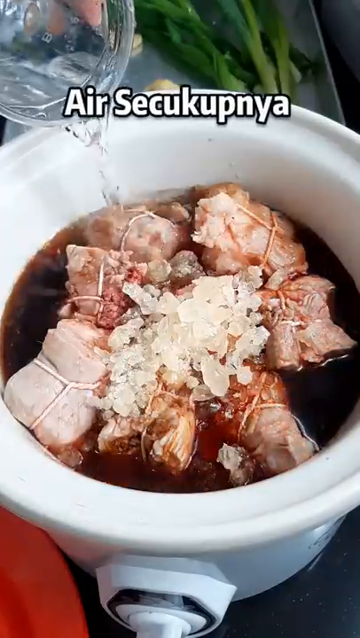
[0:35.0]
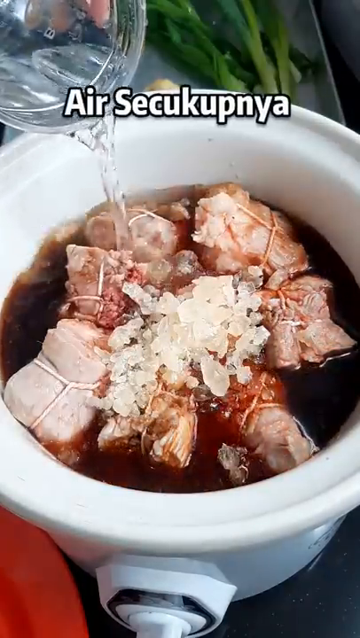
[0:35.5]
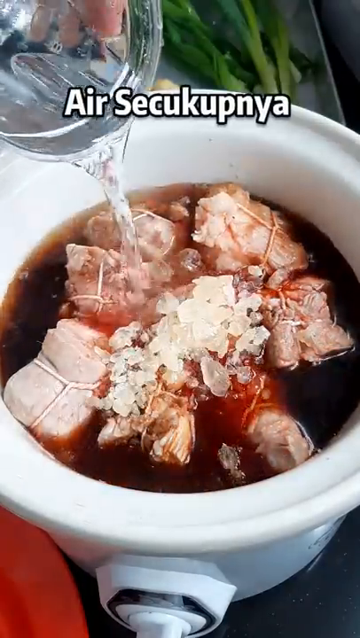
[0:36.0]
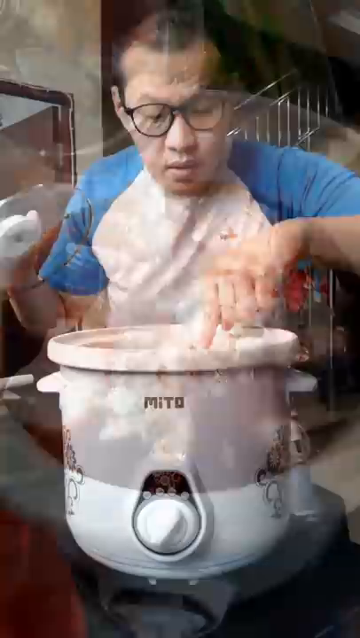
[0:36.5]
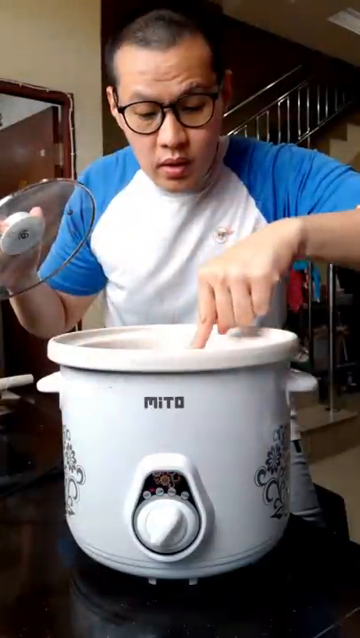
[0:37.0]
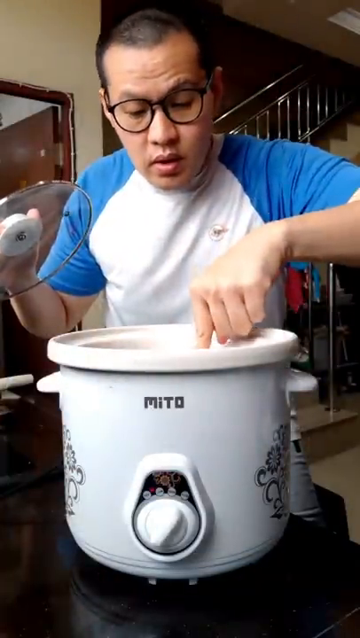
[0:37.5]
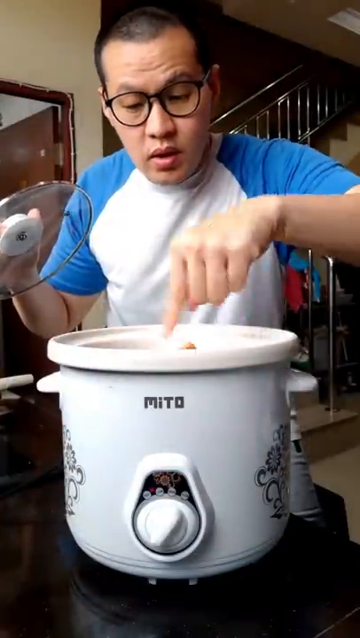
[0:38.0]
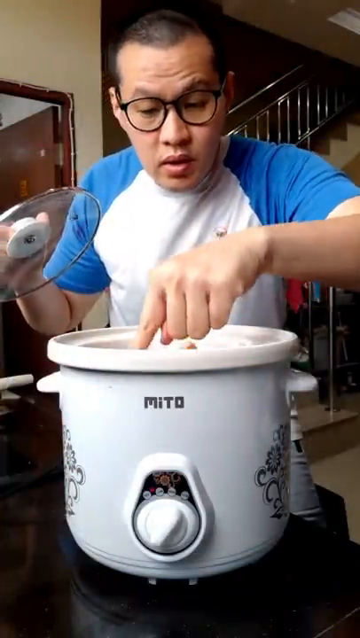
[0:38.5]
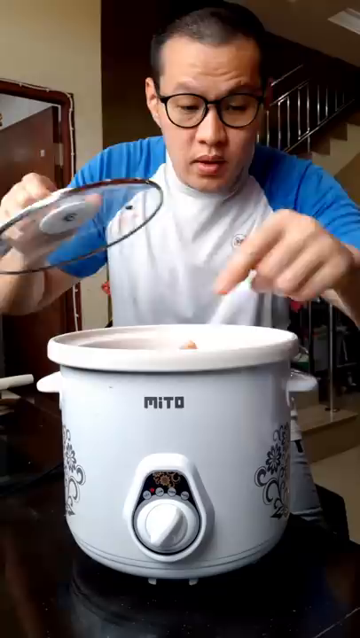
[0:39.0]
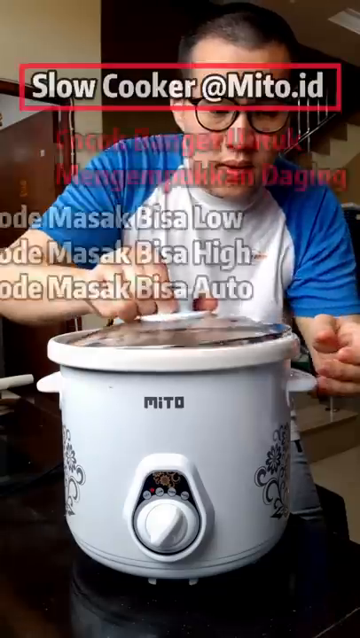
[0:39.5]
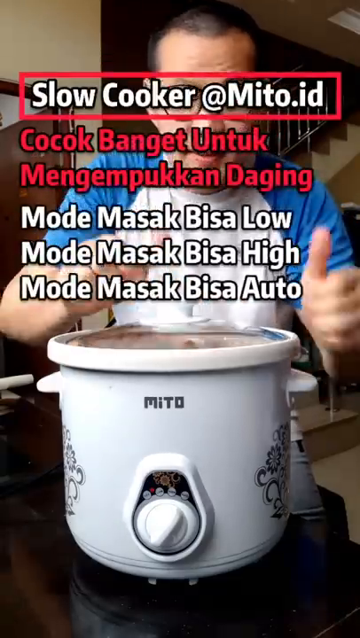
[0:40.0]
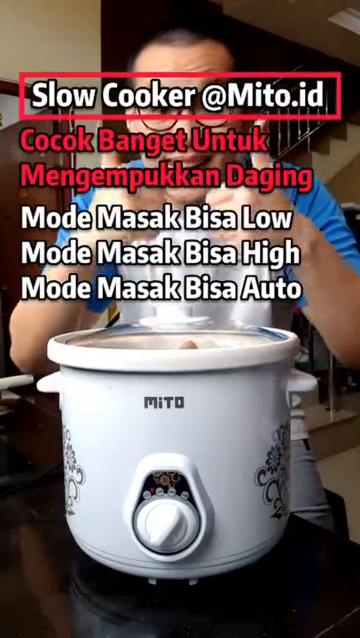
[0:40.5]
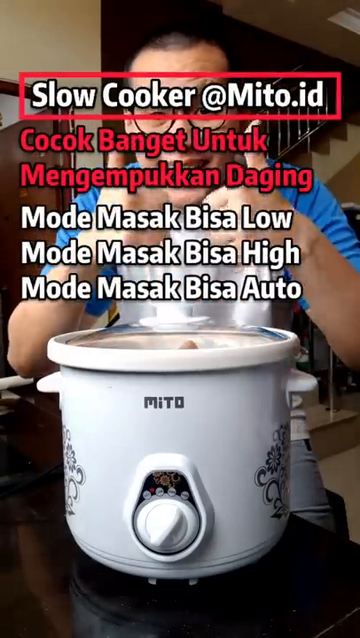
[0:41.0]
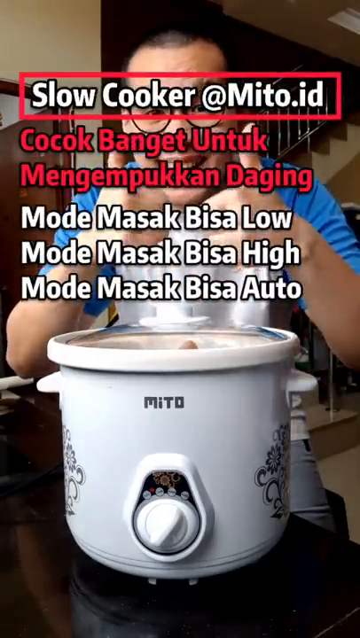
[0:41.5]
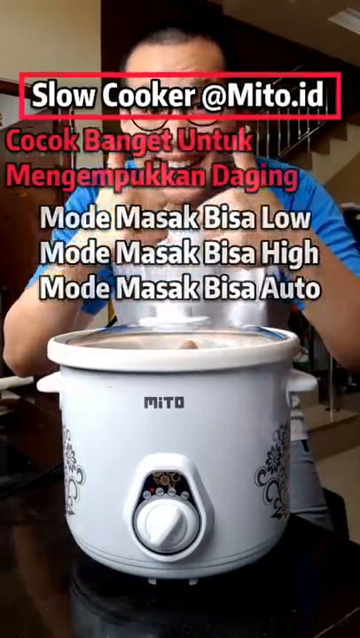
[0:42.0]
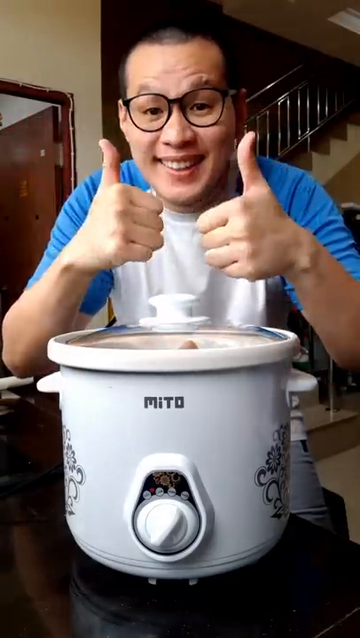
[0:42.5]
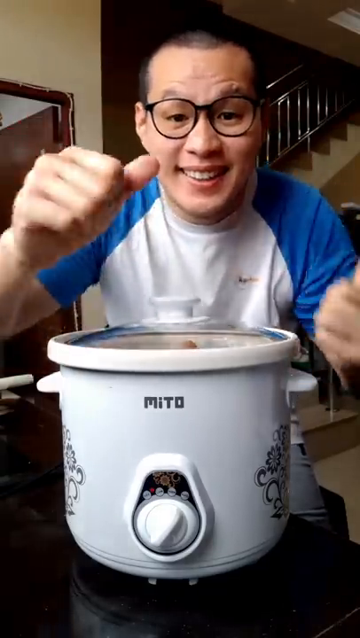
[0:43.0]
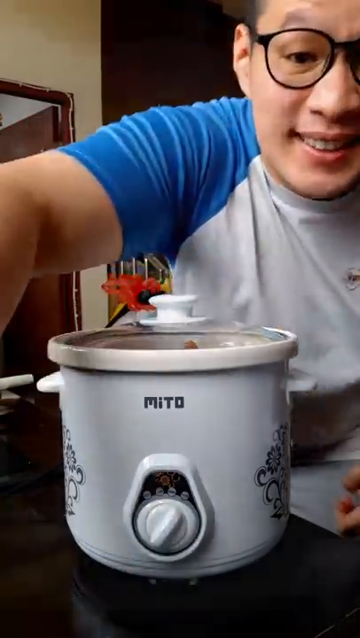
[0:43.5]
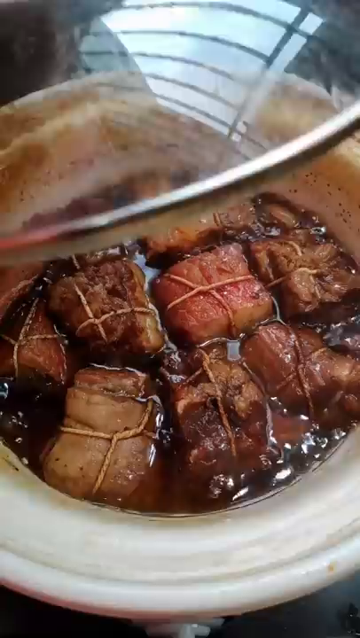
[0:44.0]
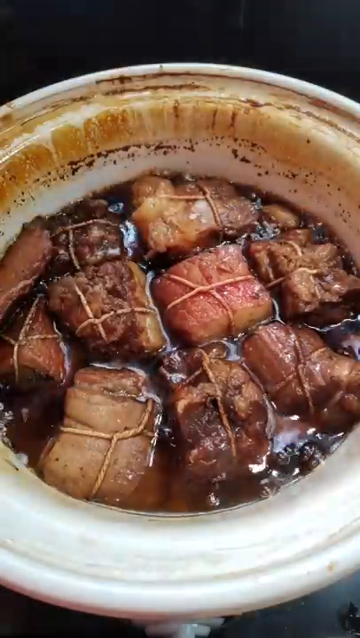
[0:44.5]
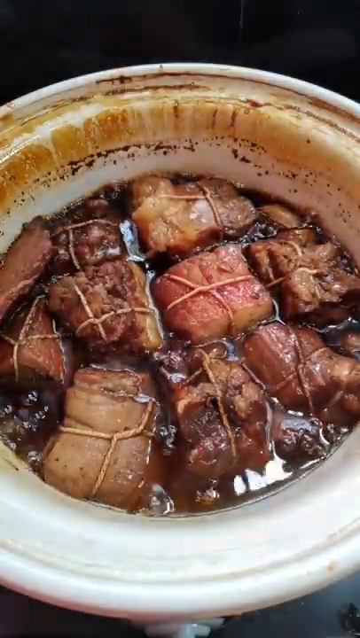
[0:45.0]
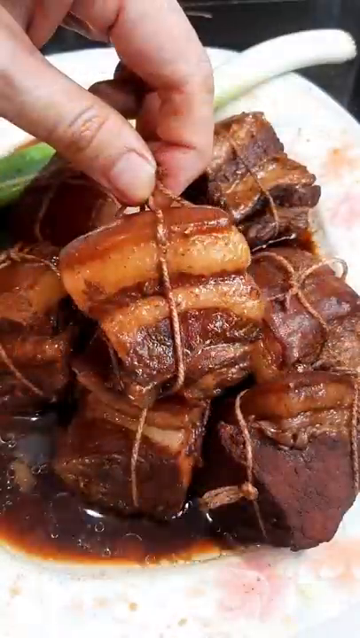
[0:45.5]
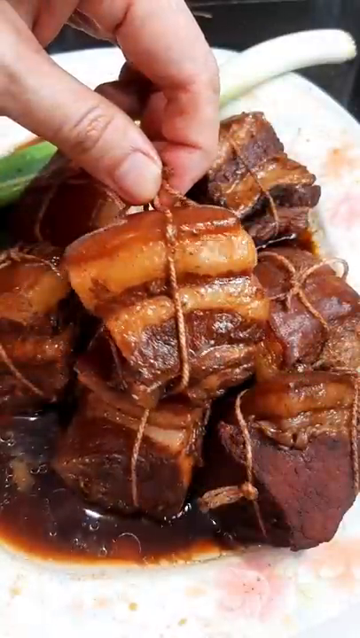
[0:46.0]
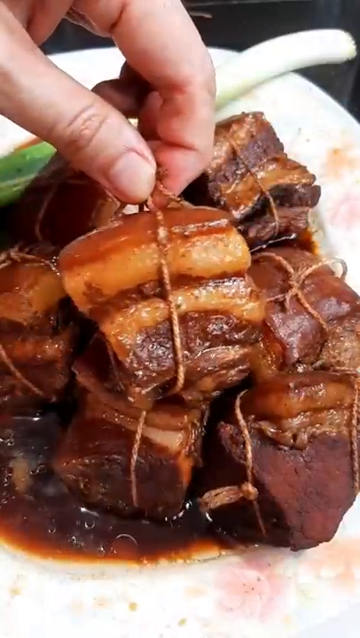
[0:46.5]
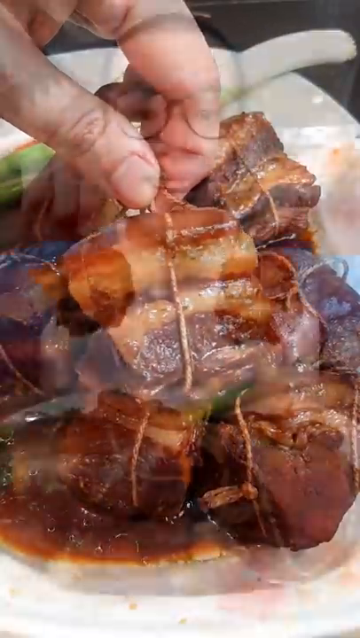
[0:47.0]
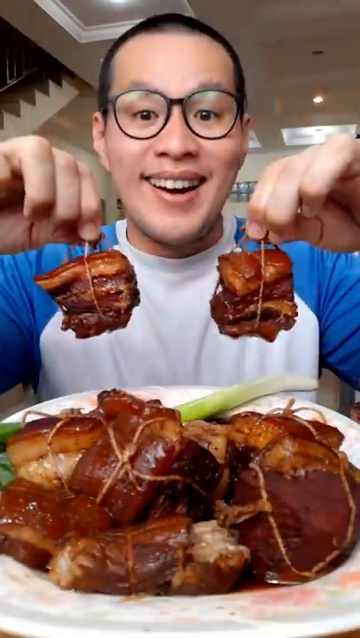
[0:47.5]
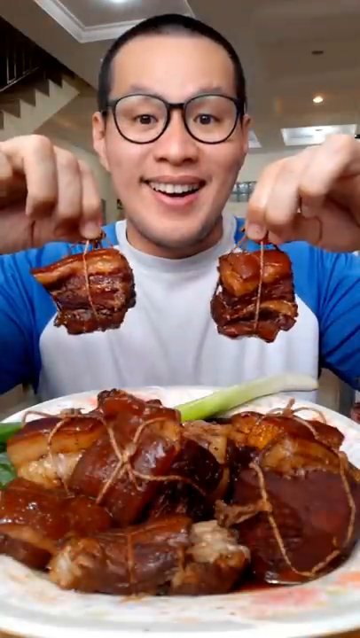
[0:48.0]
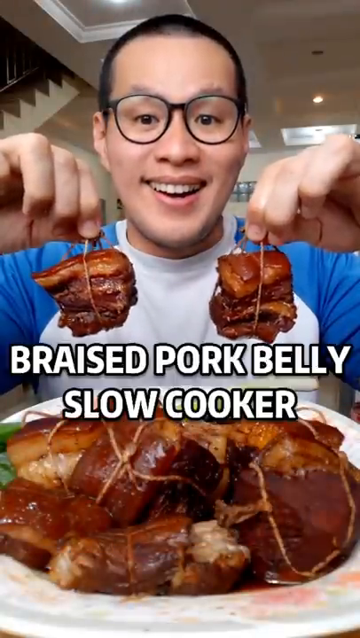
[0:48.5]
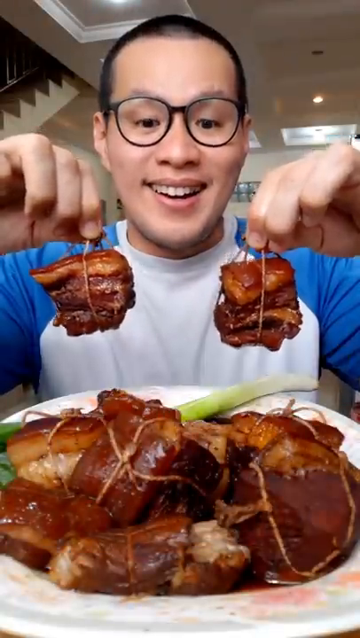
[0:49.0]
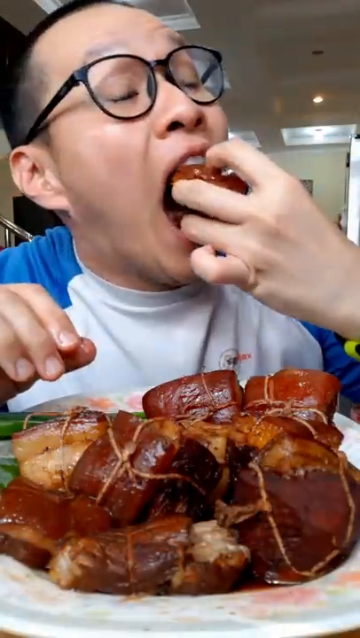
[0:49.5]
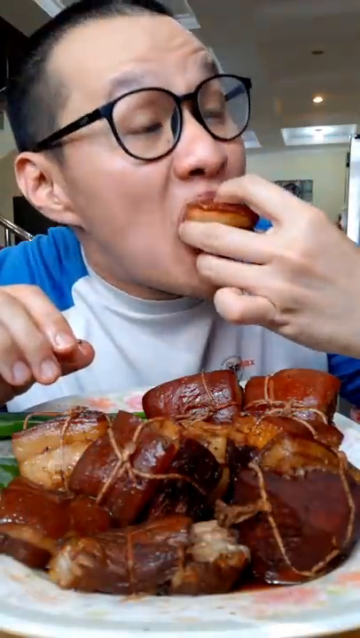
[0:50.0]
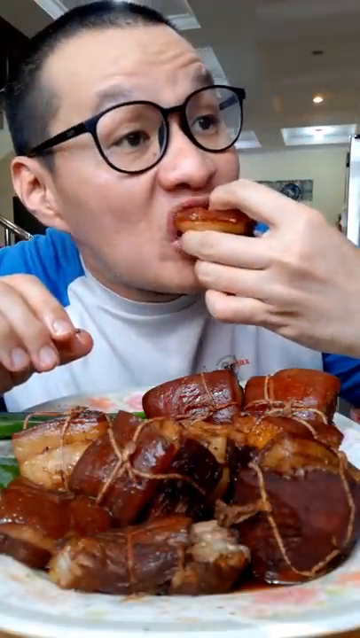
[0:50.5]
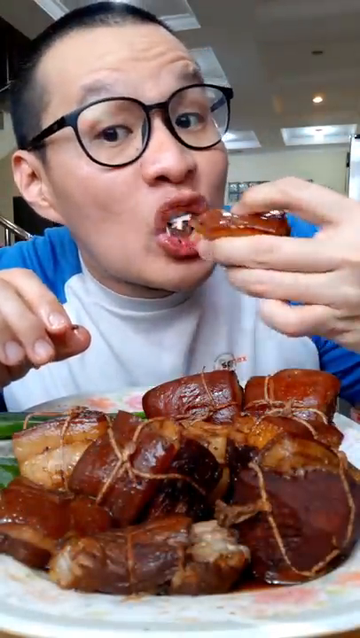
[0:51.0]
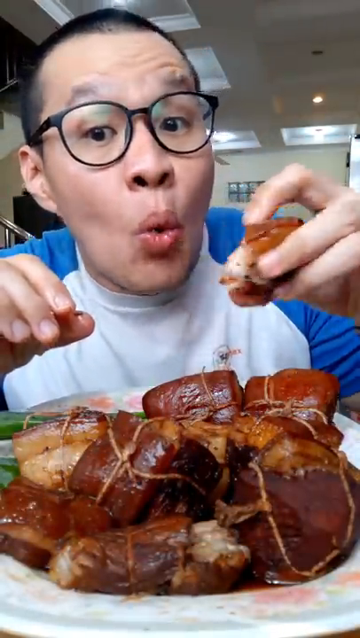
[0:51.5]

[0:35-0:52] The man adds water to the mixture of meat, spring onion, sugar, red sauce, dark soy sauce, ginger and garlic. He cooks it in a white, circular slow cooker with a button that spins to adjust the settings, apparently setting it to low, then high, then auto. He makes some motions, and the cooking finishes. He holds the braised pork belly up by its tight string and then eats the whole thing. Text, probably showing the cooking times, appears in a language that is probably Filipino.